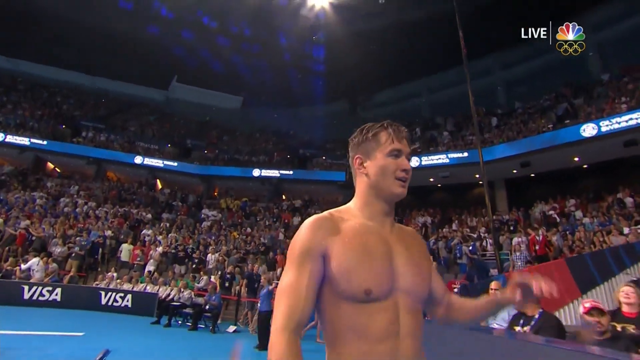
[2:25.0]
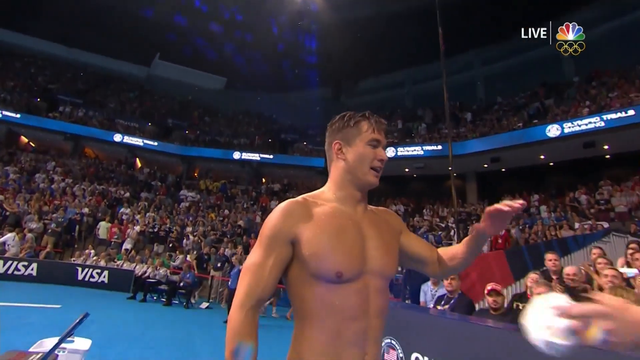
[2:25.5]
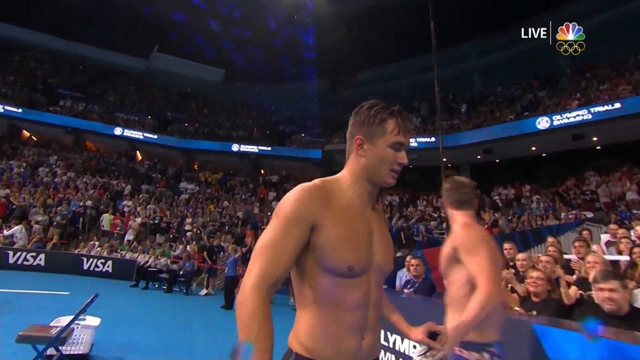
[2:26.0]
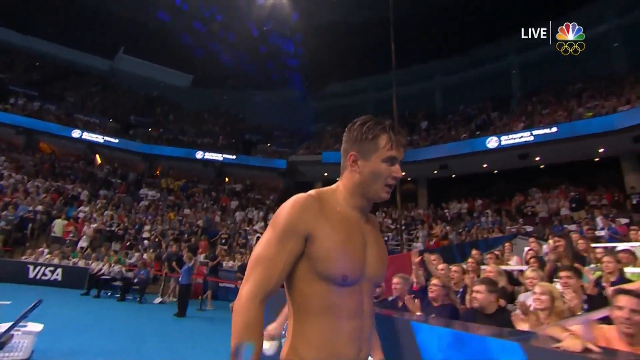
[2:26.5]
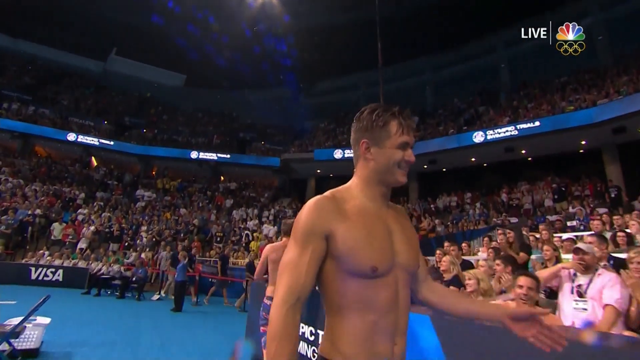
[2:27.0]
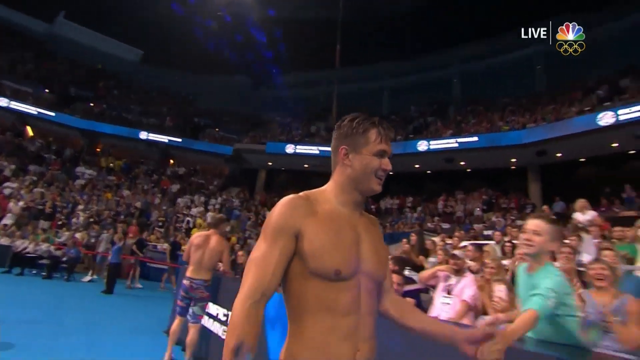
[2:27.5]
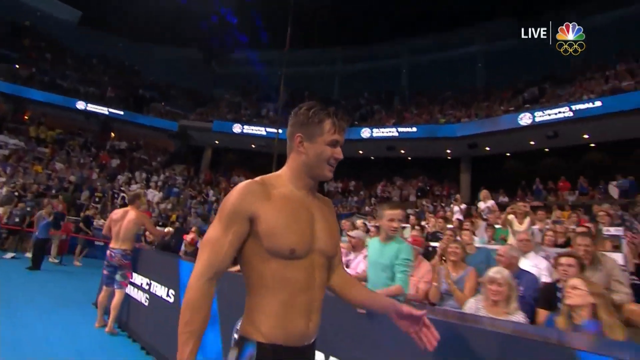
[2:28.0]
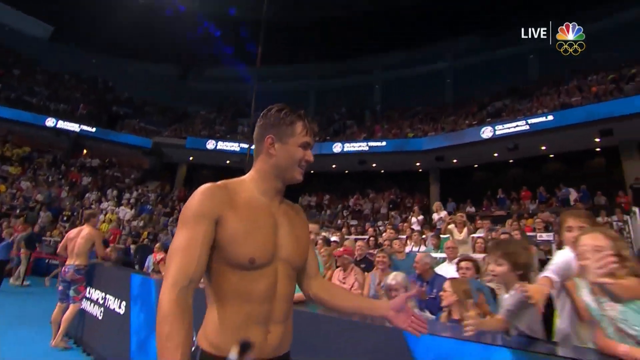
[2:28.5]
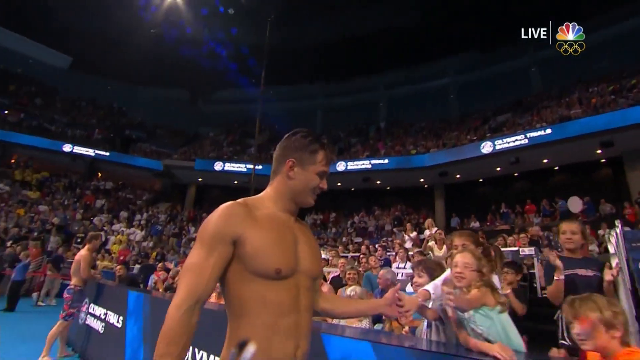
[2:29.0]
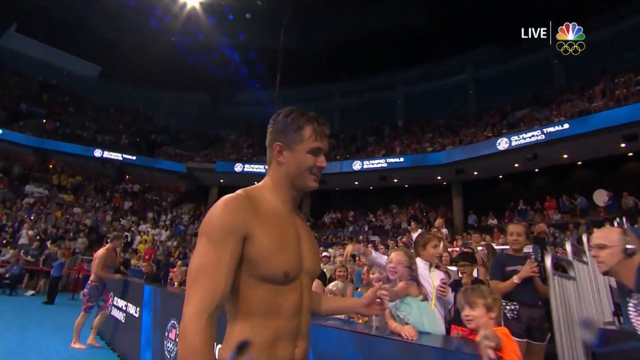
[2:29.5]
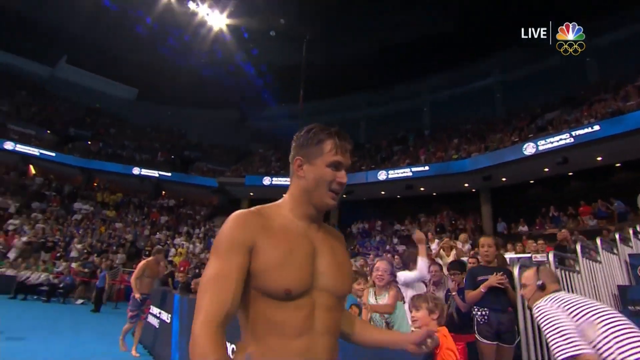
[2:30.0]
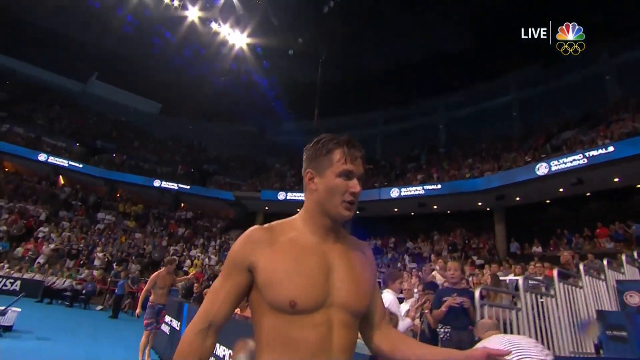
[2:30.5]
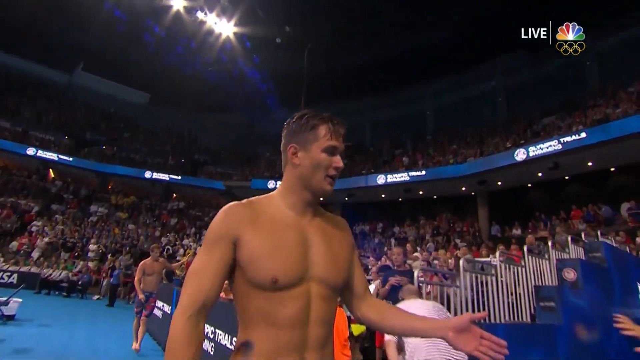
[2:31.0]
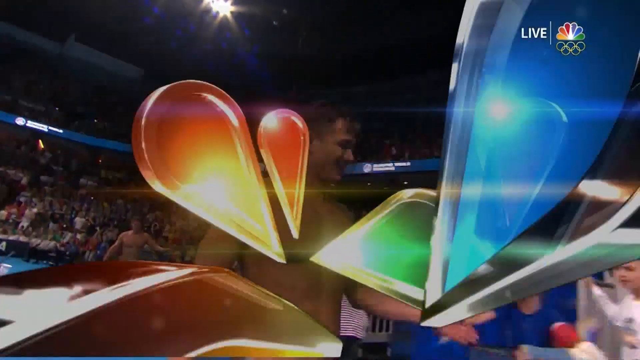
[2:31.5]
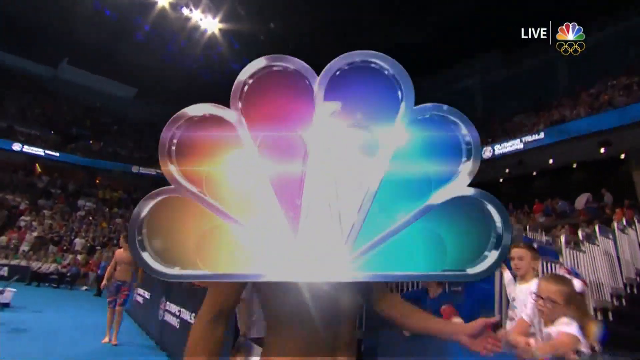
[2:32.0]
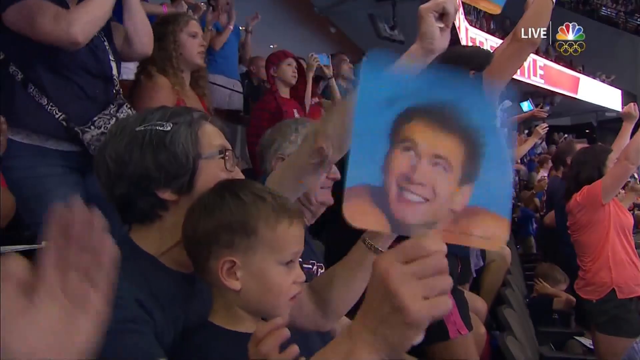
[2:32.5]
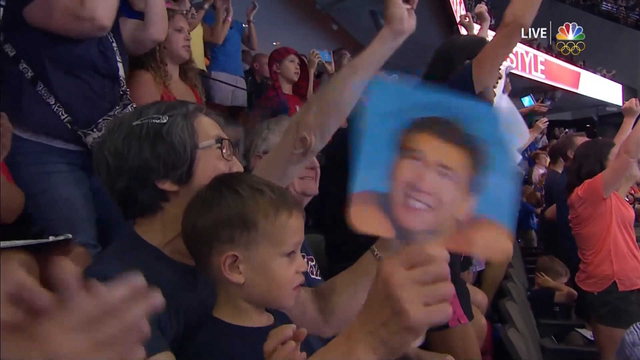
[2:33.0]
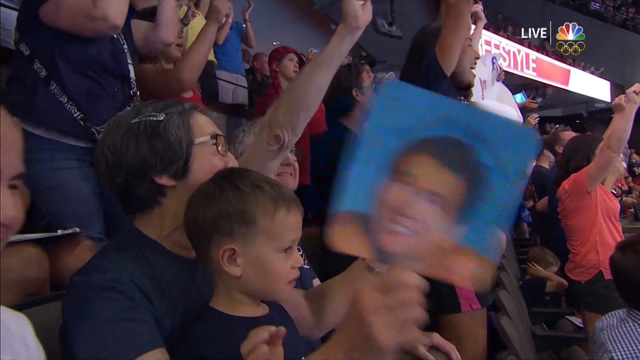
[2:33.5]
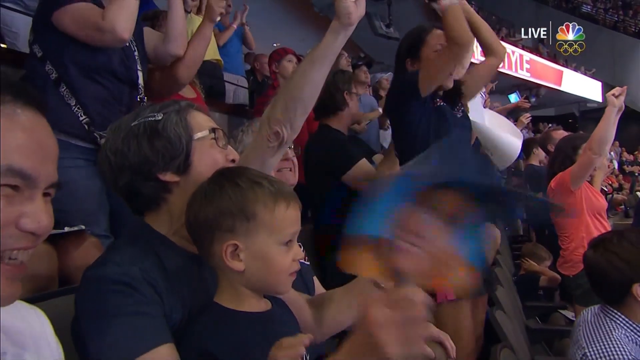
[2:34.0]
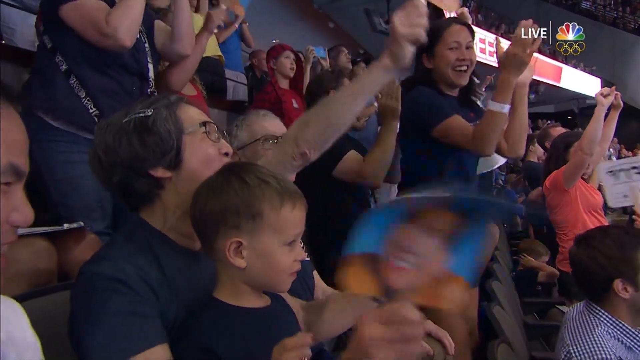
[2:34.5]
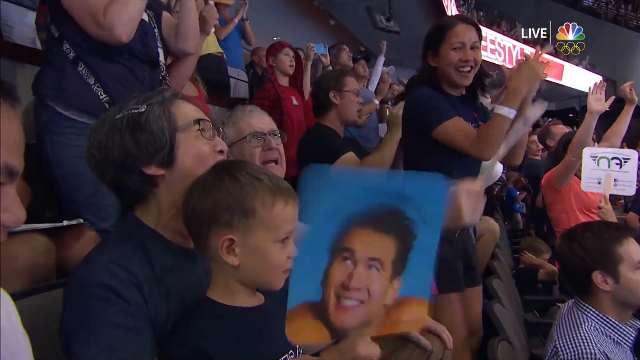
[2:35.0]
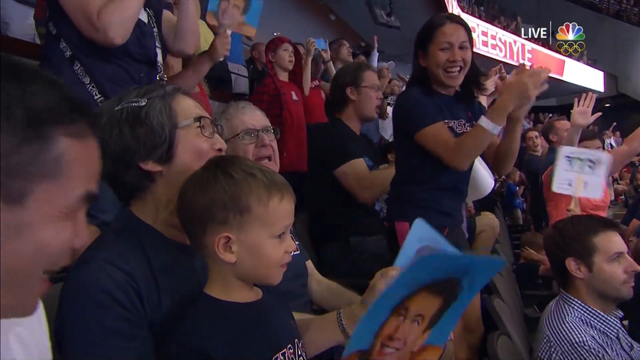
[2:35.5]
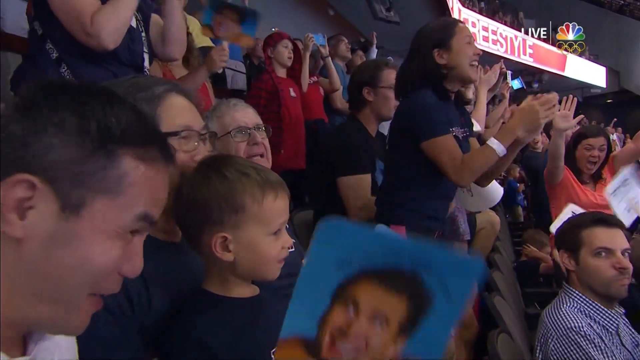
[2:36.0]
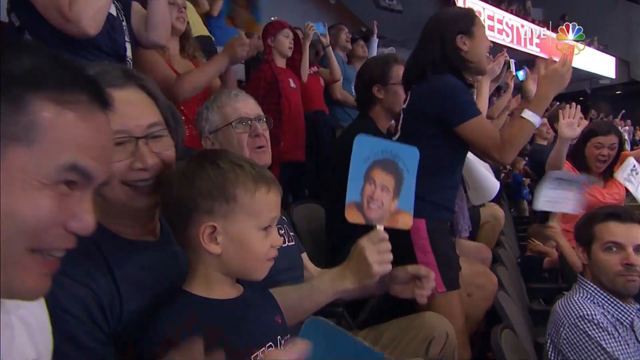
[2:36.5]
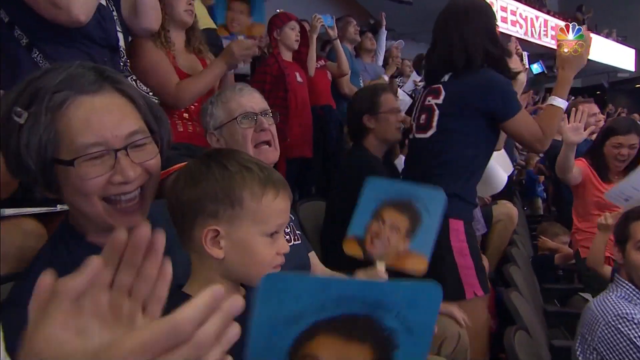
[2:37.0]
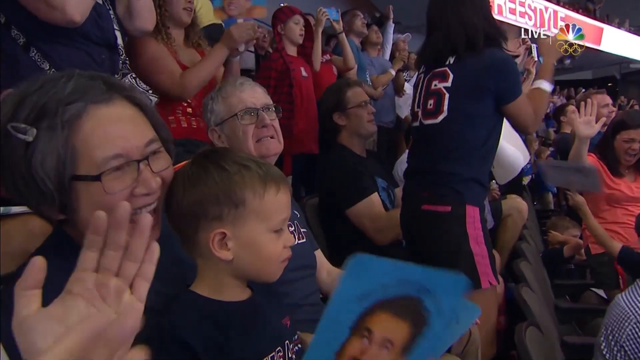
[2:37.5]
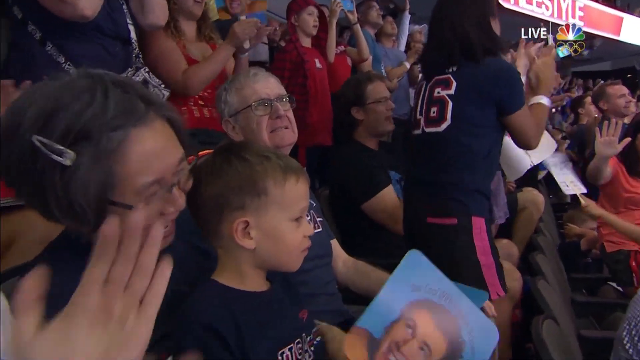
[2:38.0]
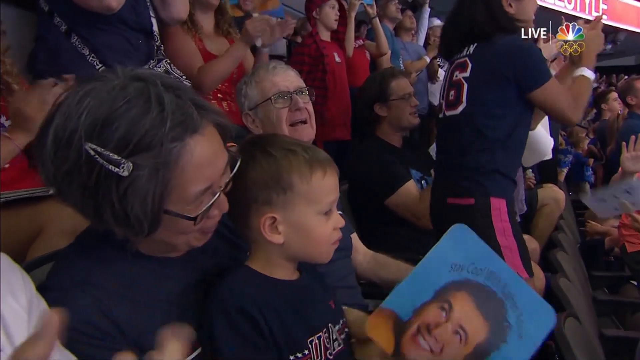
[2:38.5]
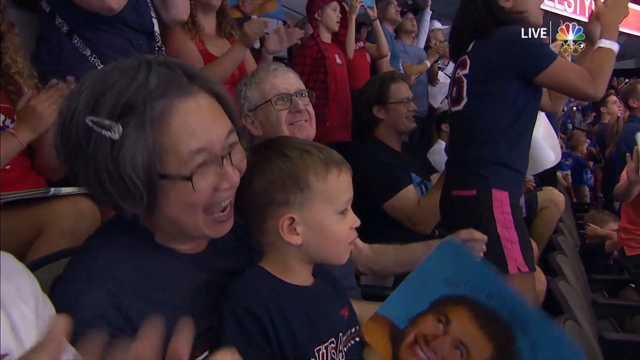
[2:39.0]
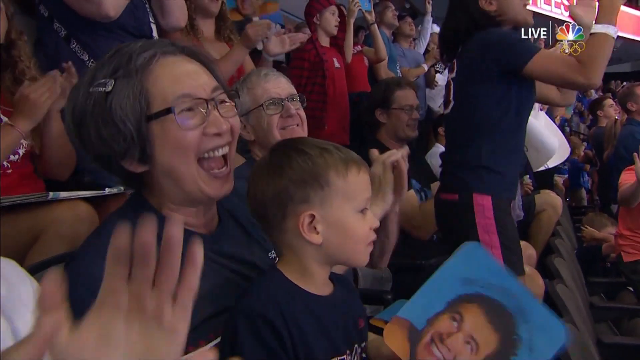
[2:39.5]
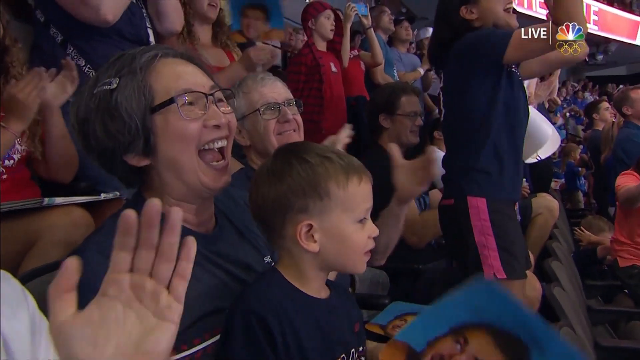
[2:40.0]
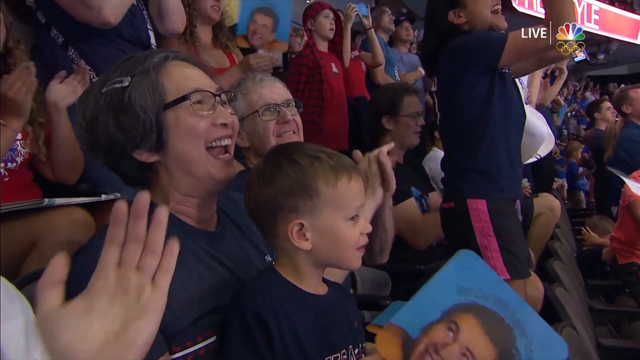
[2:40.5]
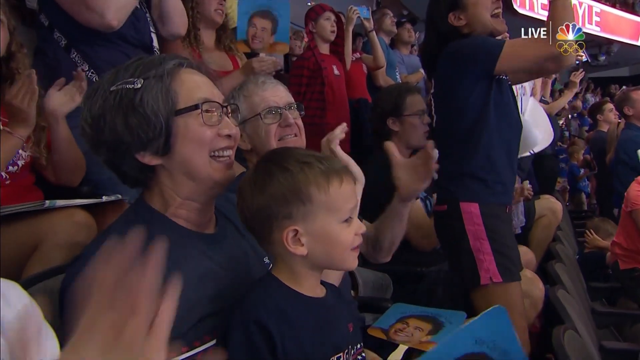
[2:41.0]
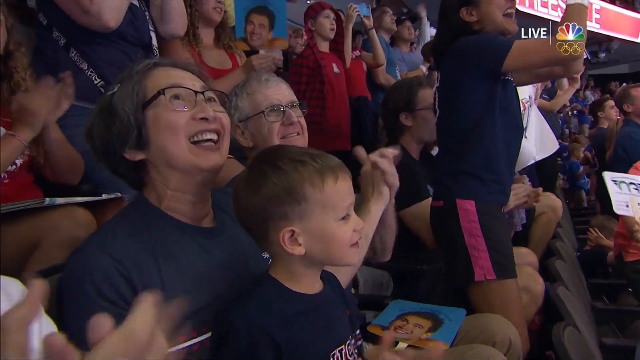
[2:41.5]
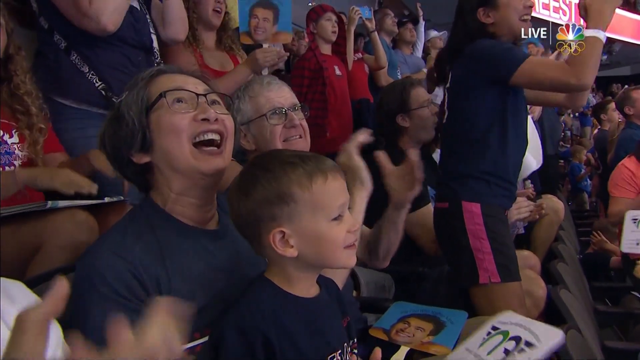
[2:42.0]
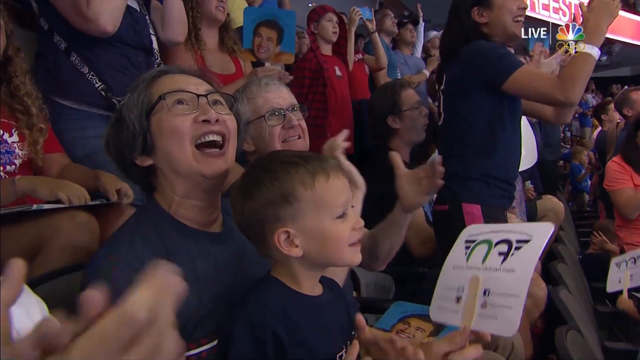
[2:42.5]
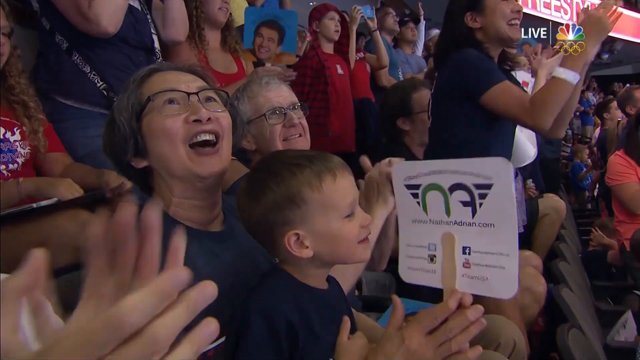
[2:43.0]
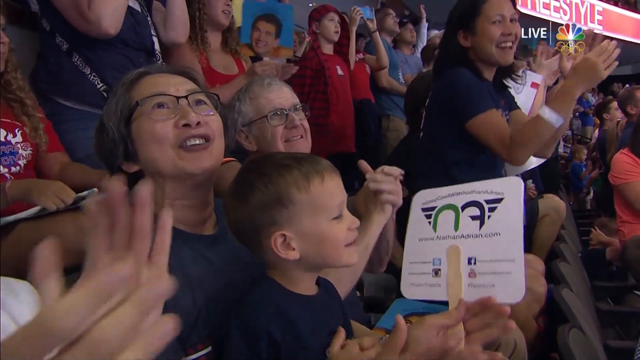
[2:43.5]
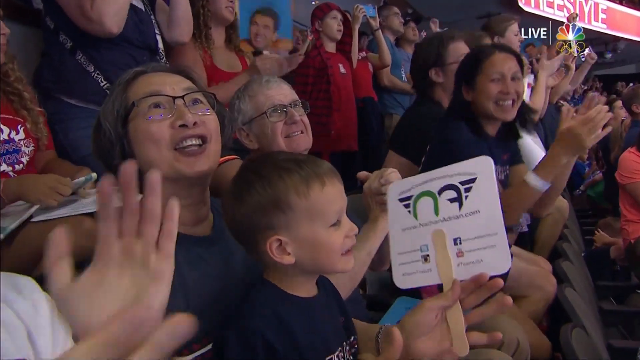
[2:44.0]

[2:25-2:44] The winner walks jubilantly, still trying to catch his breath. He shakes hands with a fellow swimmer who walks by him in the opposite direction, and with one or two spectators applauding from the stands. The spectator stands have two levels, one on the ground and another set of spectators watching from the upper level. The winner shakes hands with some little kids in front of the spectators, who are watching and applauding, and continues to touch hands with the fans. The NBC logo flashes across the screen. A spectator holds what looks like a cardboard picture with the winner's face on it and waves it jubilantly, and an old man does the same. A woman in a black t-shirt and shorts with pink vertical stripes down the side applauds. They all seem to be a family. The woman sits down and continues to applaud.